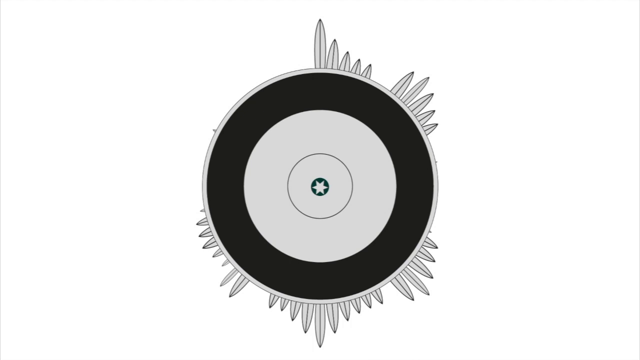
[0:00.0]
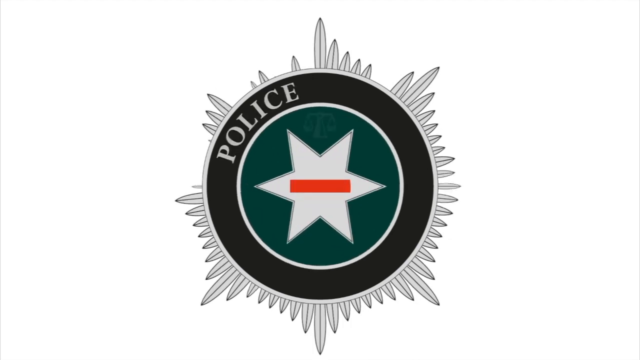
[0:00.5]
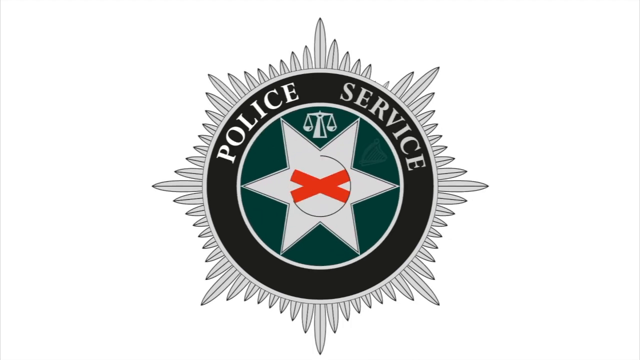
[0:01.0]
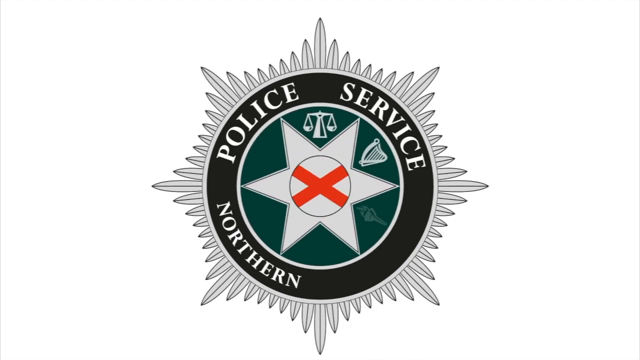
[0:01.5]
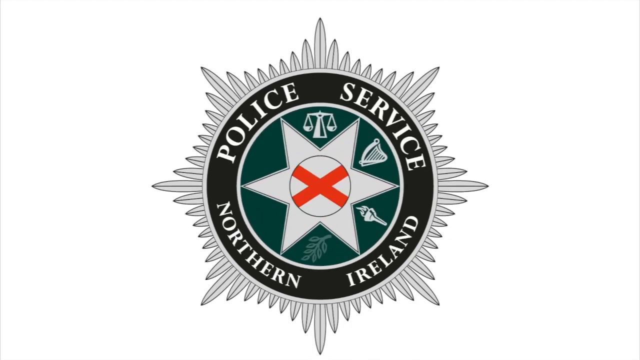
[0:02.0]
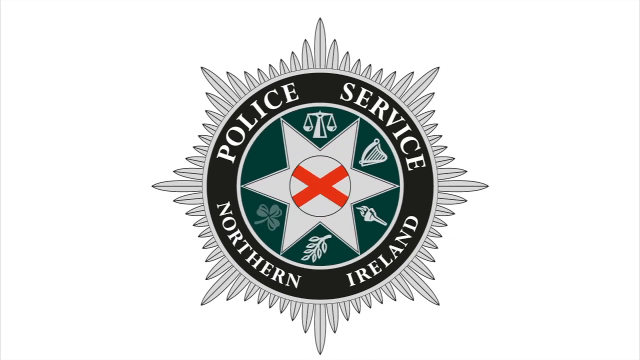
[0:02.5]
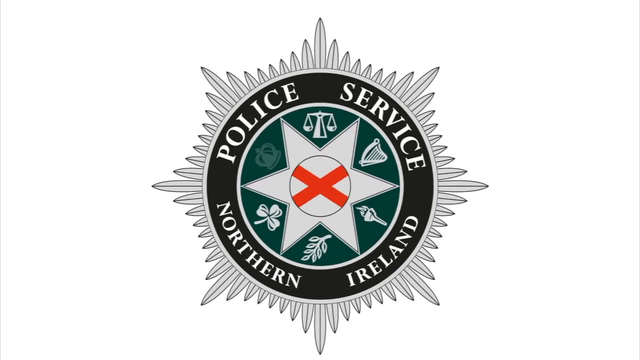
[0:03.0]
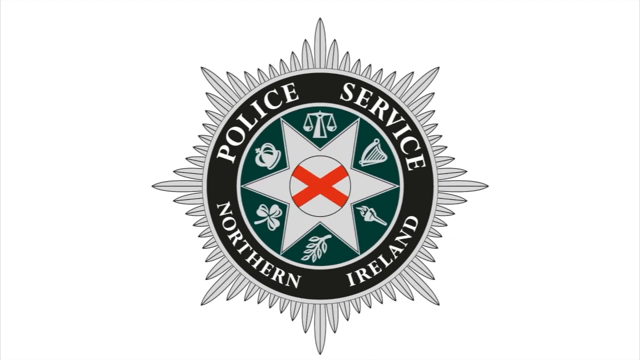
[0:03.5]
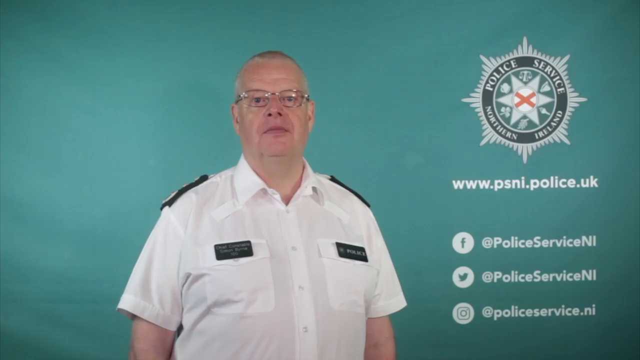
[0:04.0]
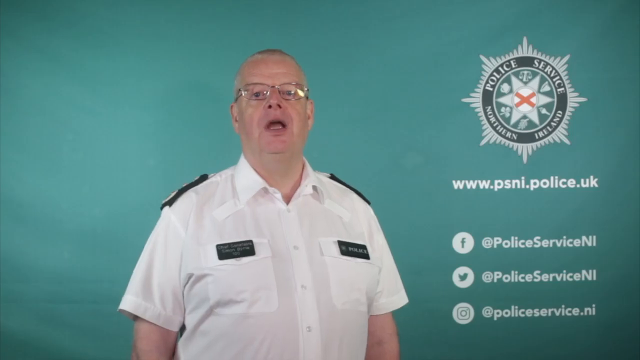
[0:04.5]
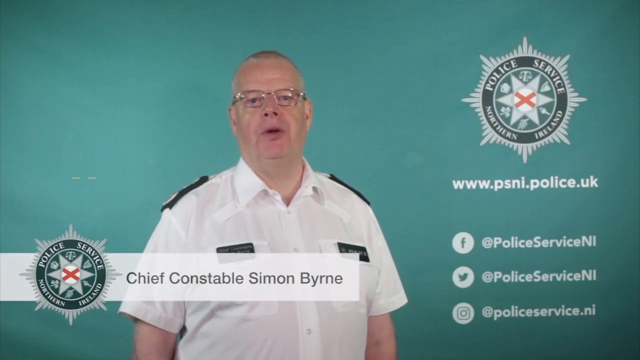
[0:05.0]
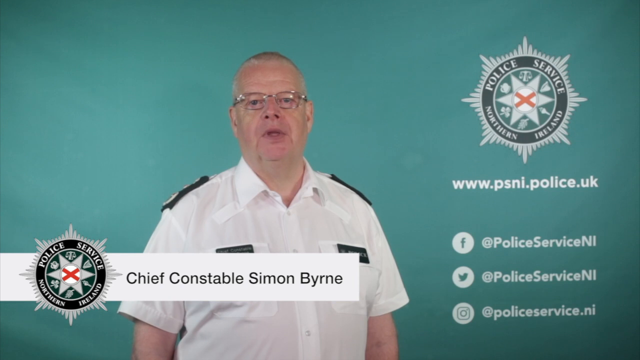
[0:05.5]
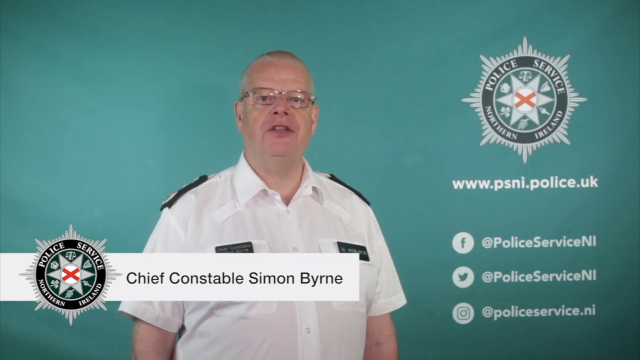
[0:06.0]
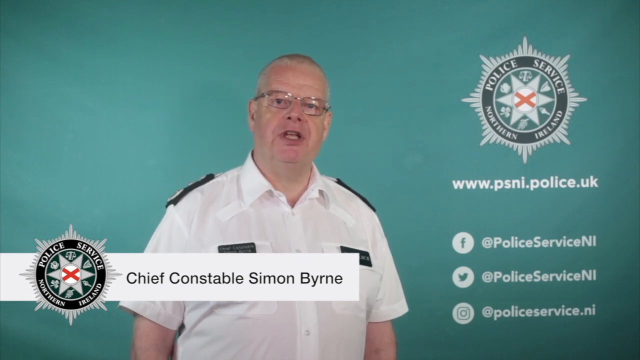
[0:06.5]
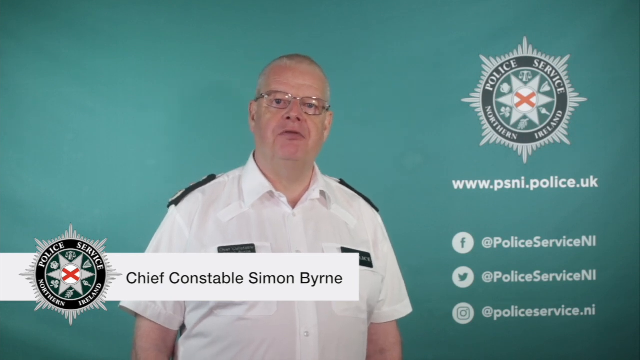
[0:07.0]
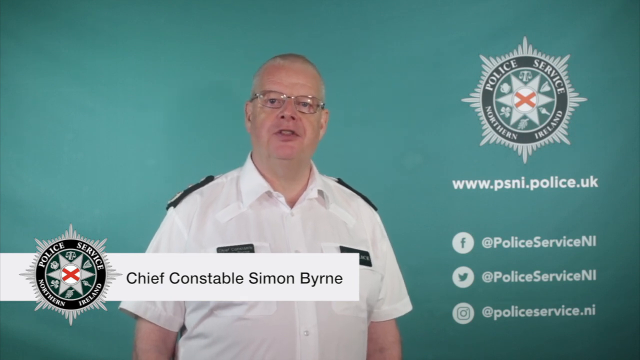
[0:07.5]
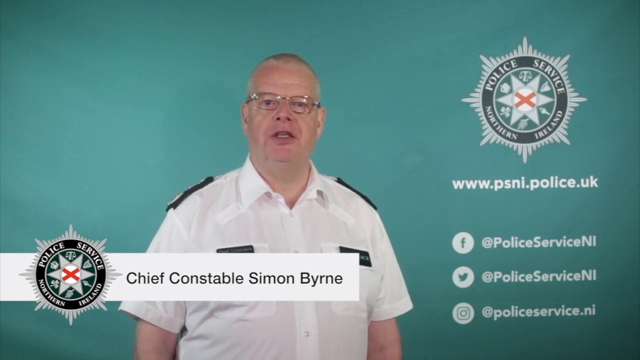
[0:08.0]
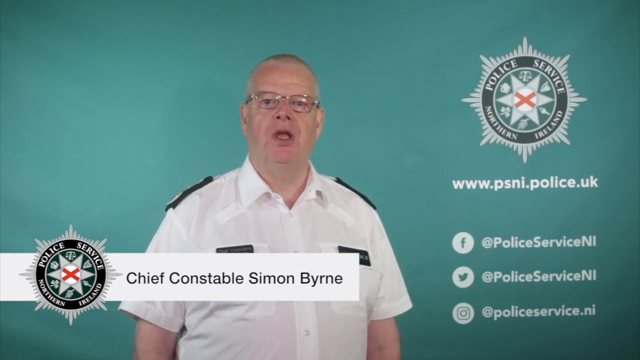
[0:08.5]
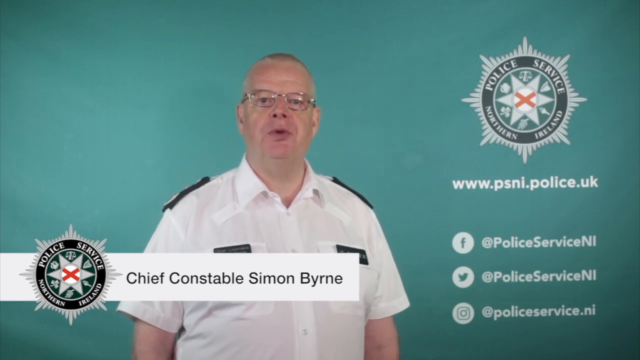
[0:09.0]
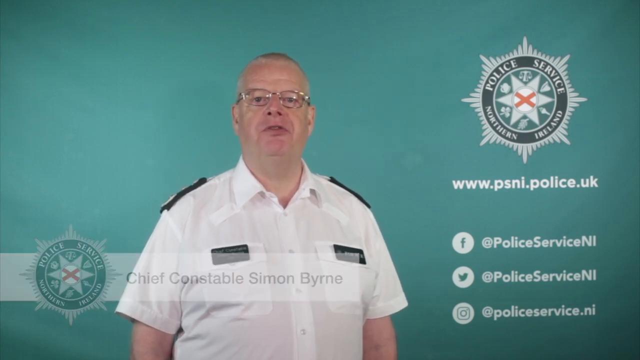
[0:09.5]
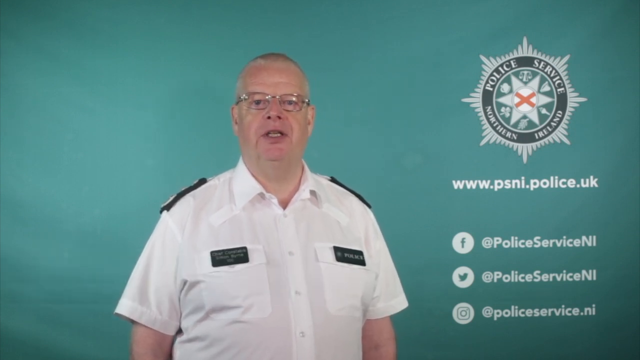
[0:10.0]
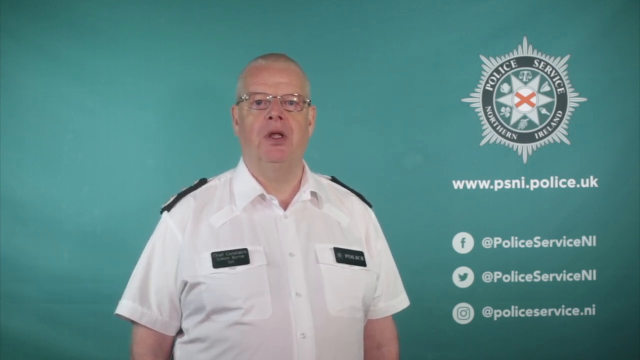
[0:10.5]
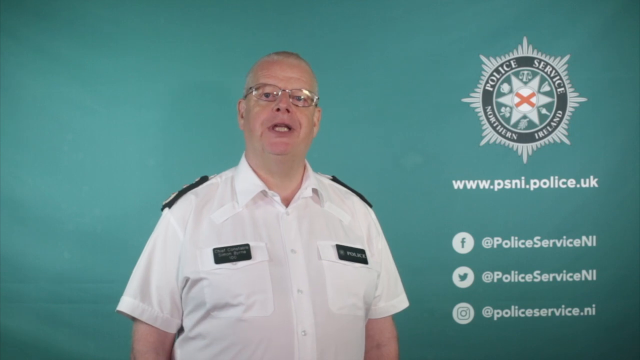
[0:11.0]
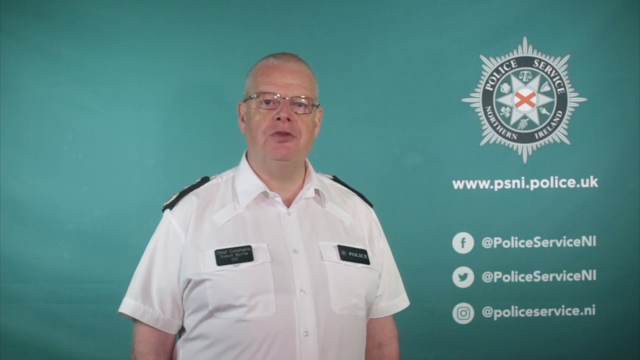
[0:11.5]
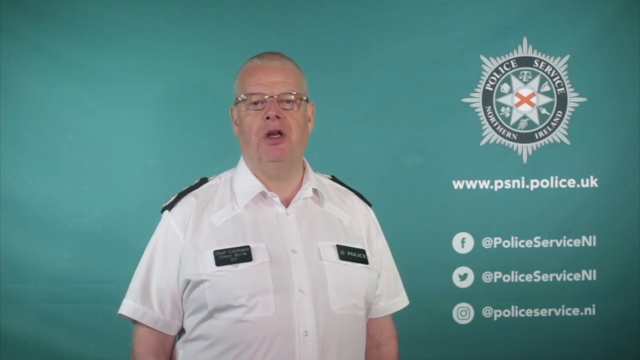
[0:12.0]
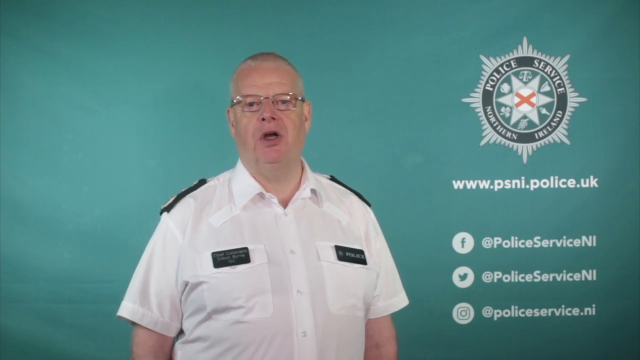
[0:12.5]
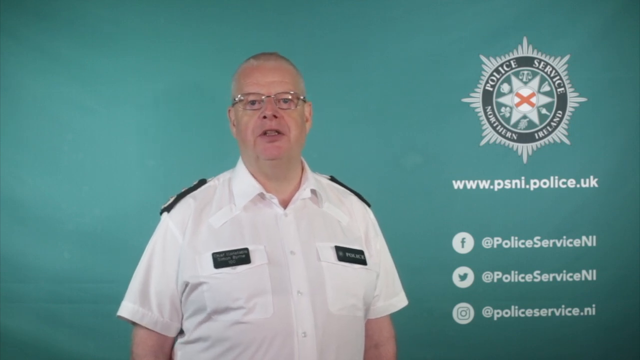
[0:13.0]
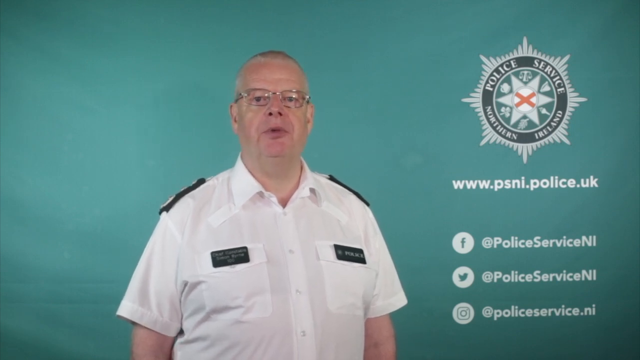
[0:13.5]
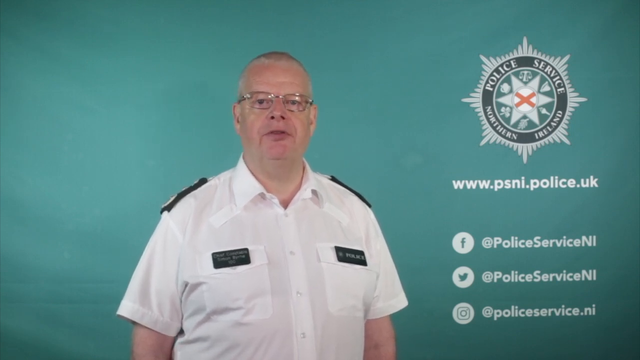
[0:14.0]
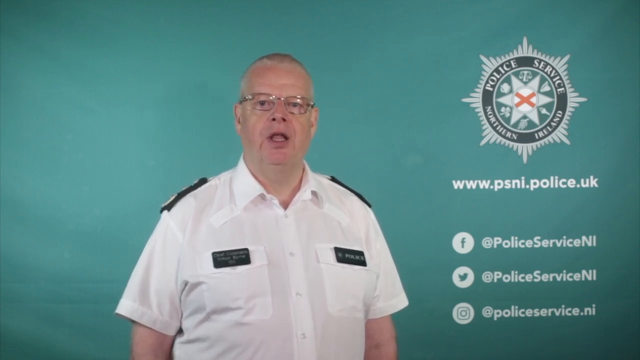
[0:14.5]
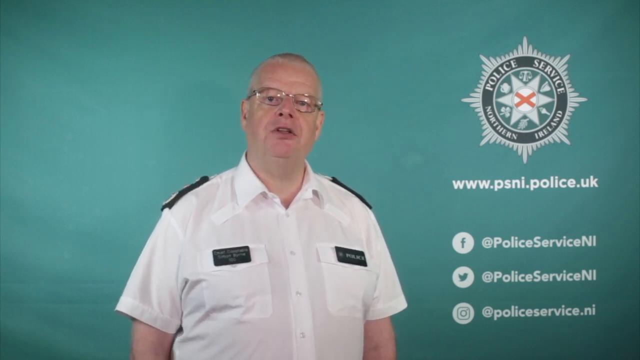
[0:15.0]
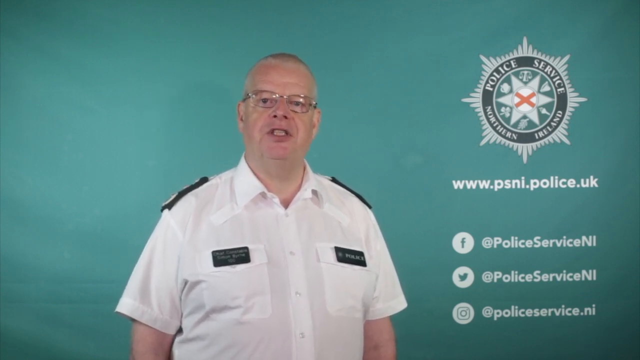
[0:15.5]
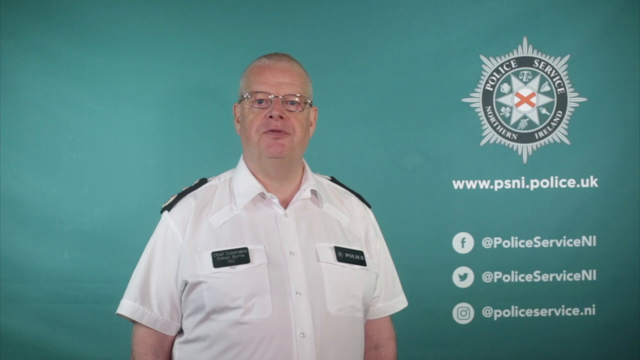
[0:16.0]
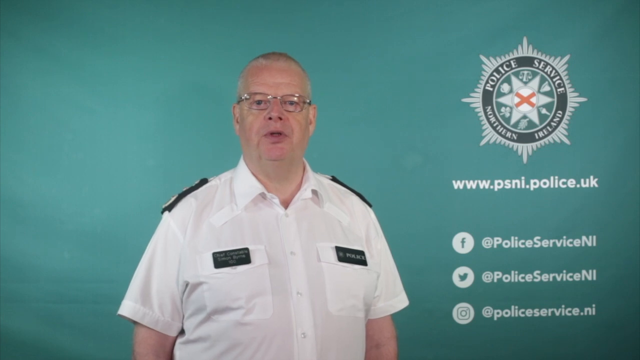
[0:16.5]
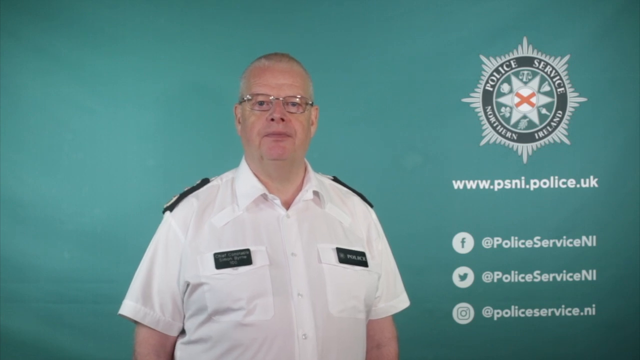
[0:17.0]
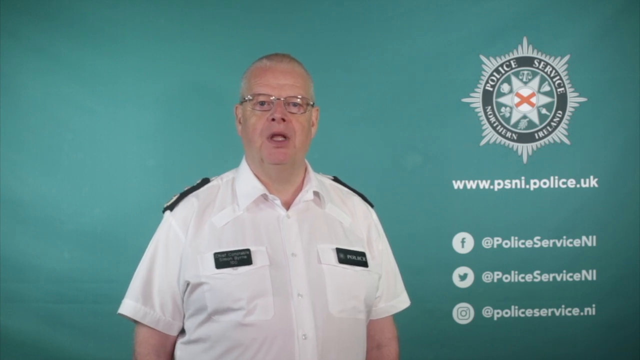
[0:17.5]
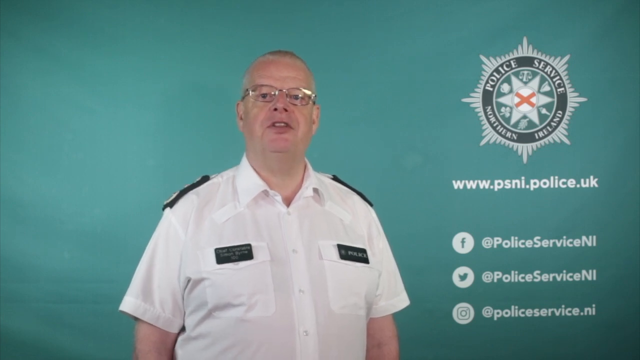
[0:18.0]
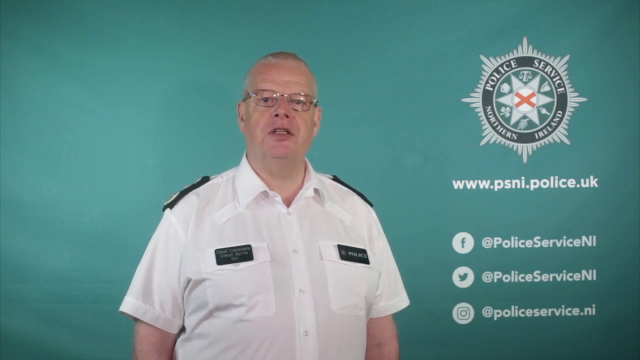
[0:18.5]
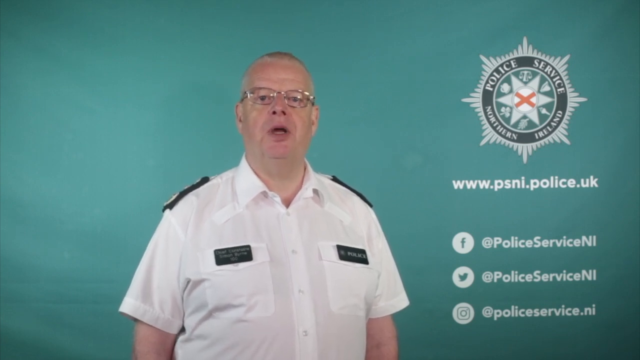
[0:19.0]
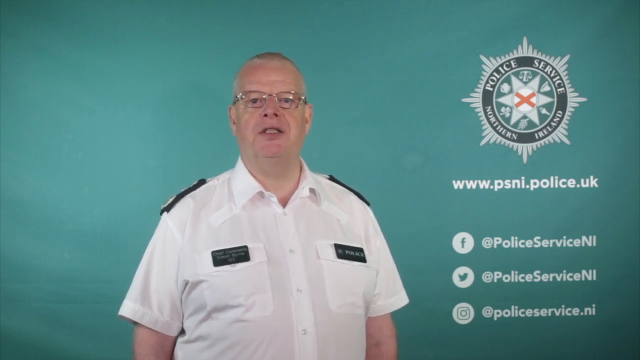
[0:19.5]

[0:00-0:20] The video opens with the insignia of the Police Service of Northern Ireland. It has a sort of flowery background and a white star with some orange stripes set inside a green background. Around the star are six symbols: a judicial symbol, what looks like a harp, a torch, maybe a laurel leaf, a three-leaf clover and a crown. A man named Chief Constable Simon Byrne then talks to the camera. The insignia is on the right-hand side, with a link to the Police Service of Northern Ireland website below it, and below that social media handles for Facebook, Twitter and Instagram, all with the username "PoliceServiceNI". The background is a greenish-blue colour and all the font is white.